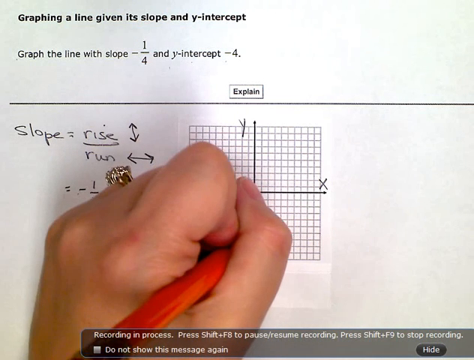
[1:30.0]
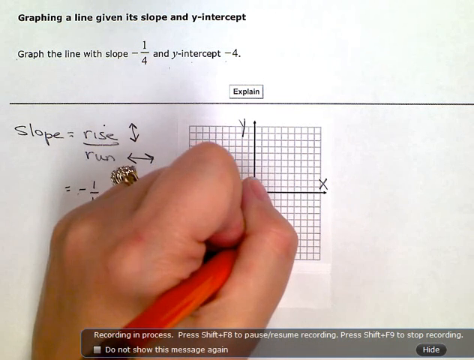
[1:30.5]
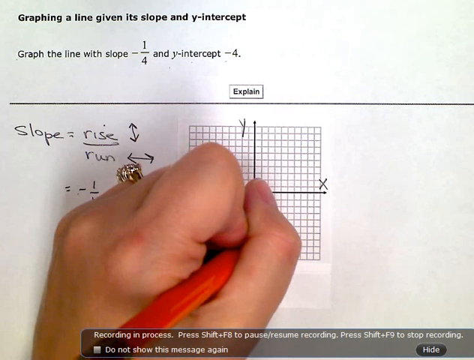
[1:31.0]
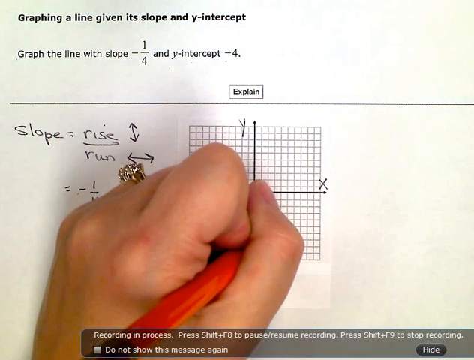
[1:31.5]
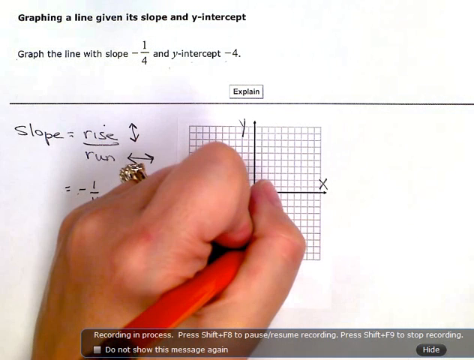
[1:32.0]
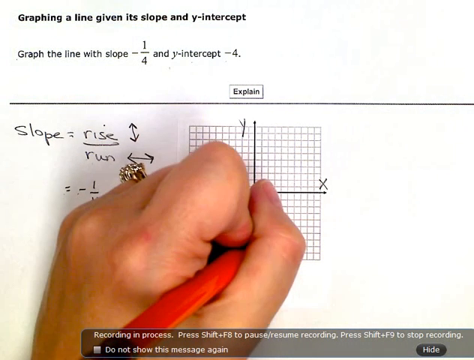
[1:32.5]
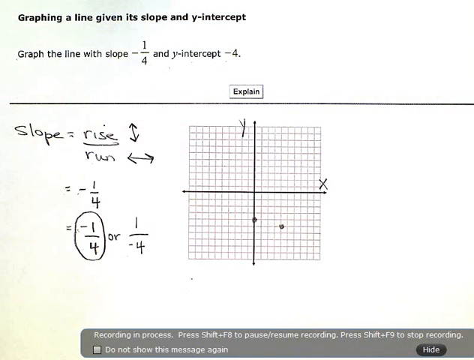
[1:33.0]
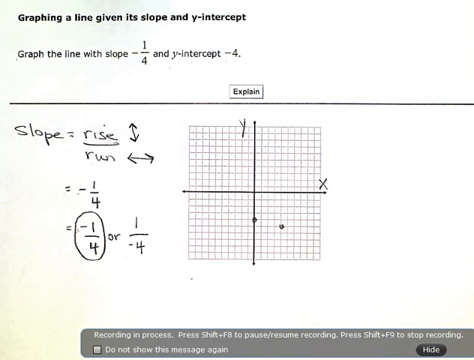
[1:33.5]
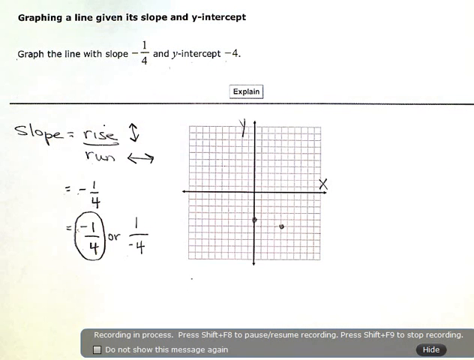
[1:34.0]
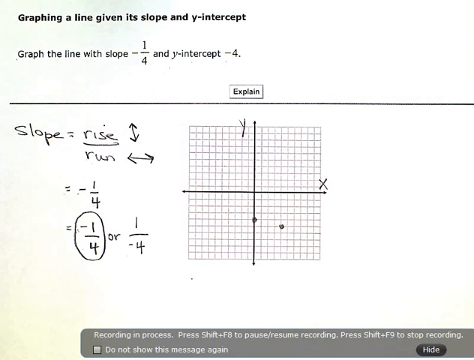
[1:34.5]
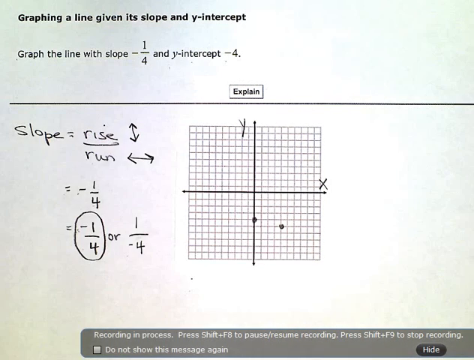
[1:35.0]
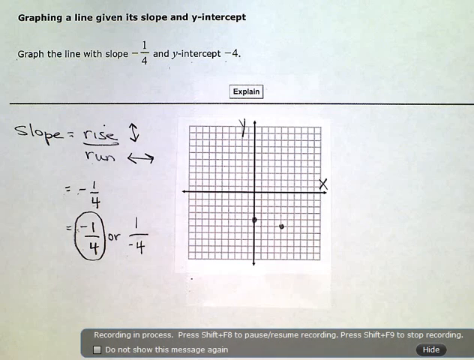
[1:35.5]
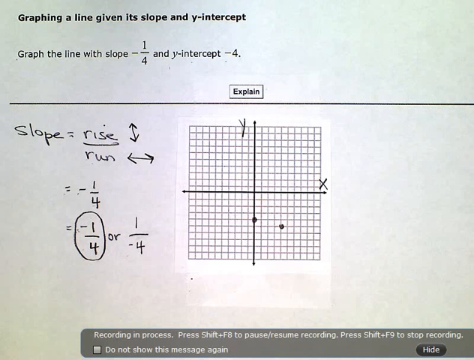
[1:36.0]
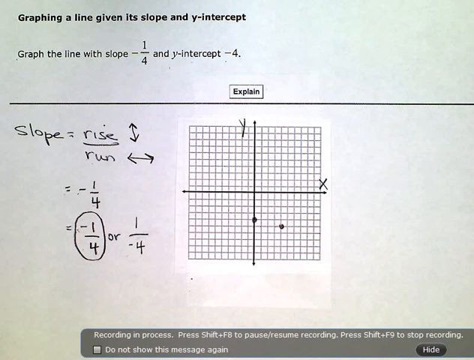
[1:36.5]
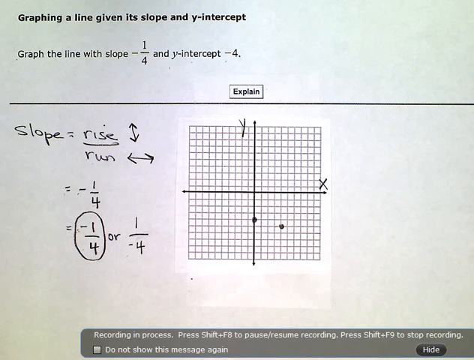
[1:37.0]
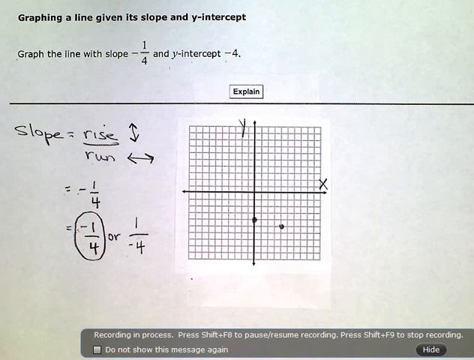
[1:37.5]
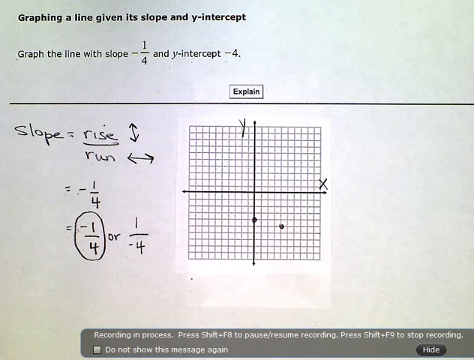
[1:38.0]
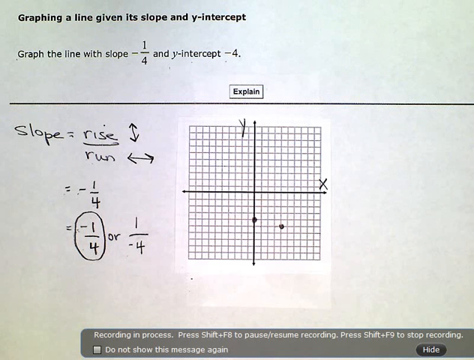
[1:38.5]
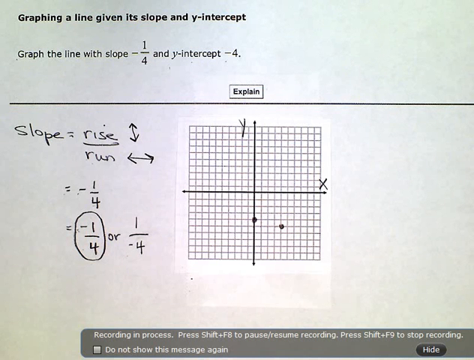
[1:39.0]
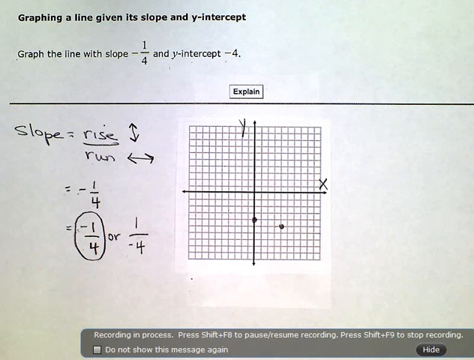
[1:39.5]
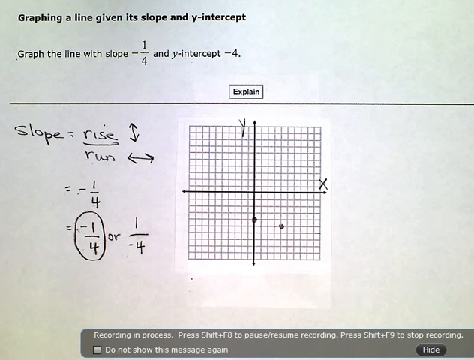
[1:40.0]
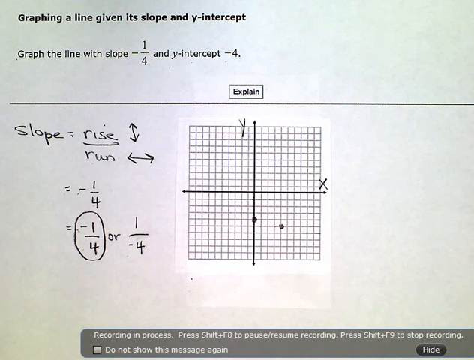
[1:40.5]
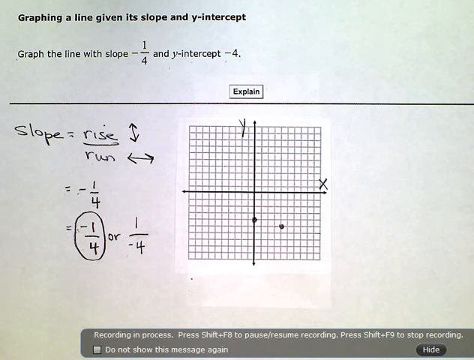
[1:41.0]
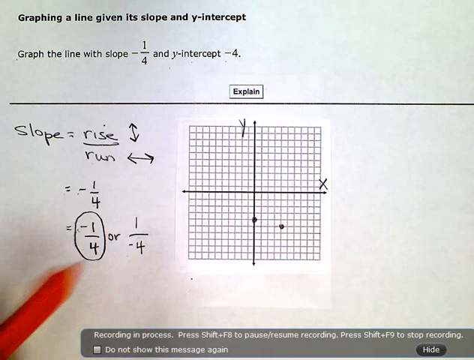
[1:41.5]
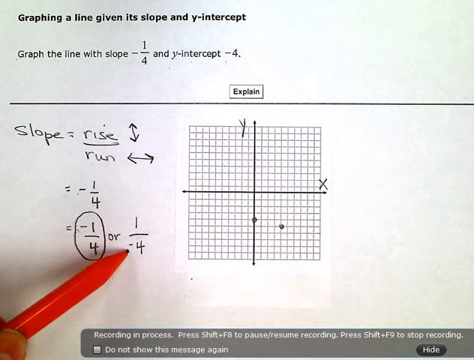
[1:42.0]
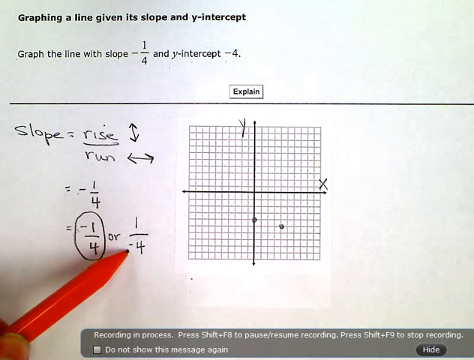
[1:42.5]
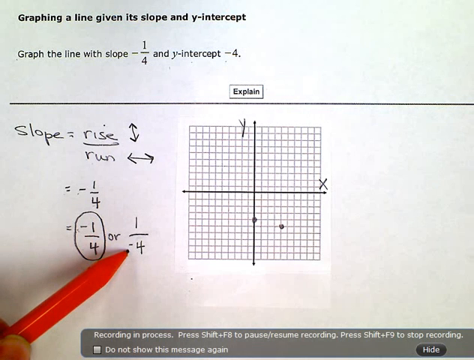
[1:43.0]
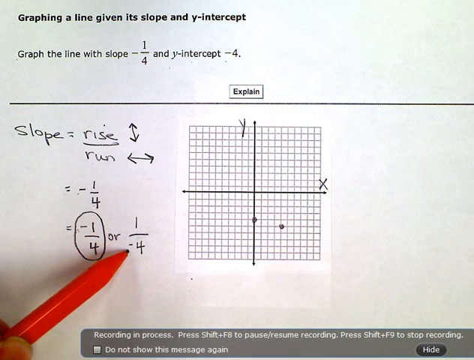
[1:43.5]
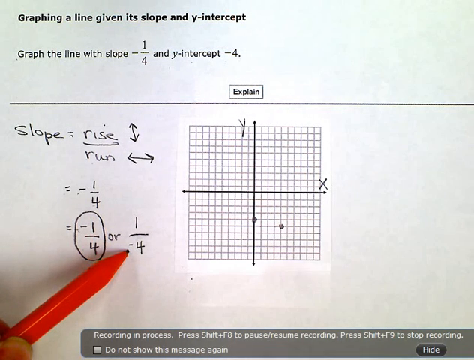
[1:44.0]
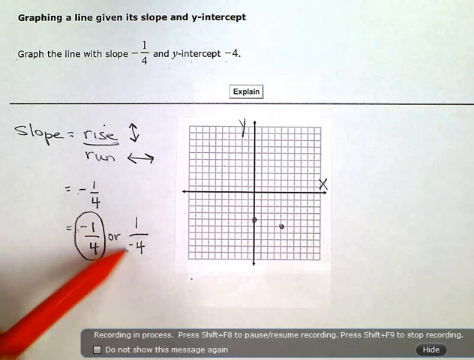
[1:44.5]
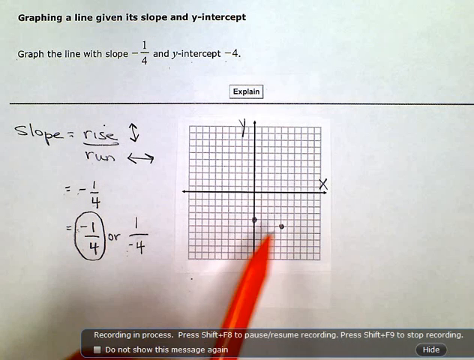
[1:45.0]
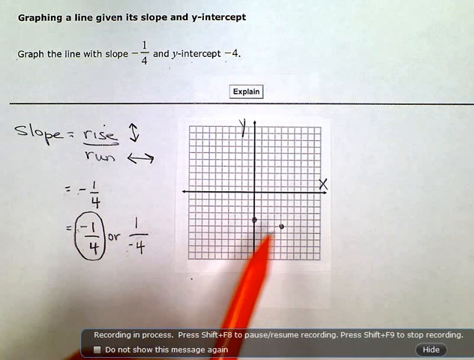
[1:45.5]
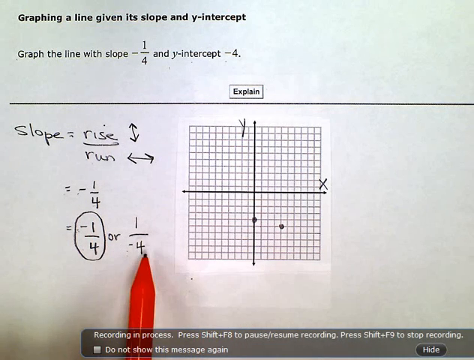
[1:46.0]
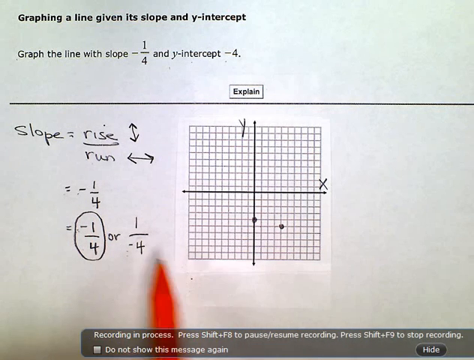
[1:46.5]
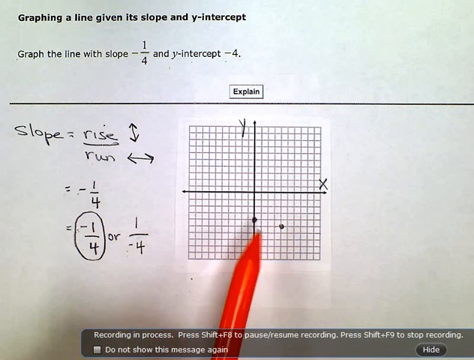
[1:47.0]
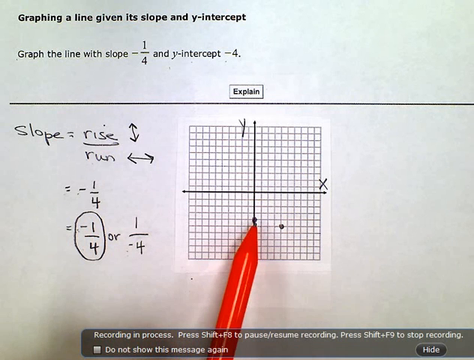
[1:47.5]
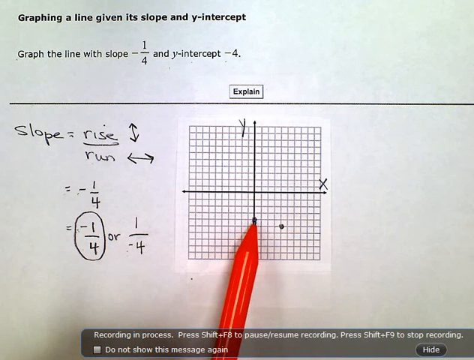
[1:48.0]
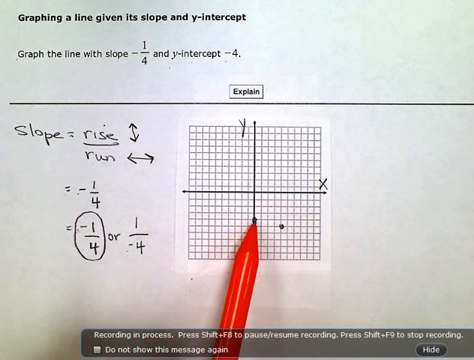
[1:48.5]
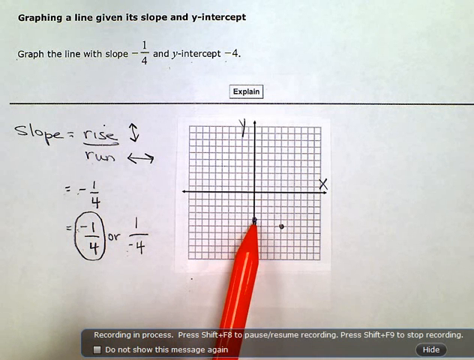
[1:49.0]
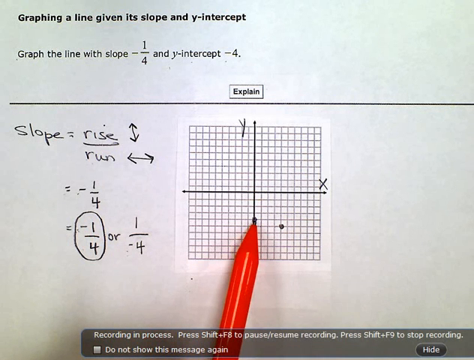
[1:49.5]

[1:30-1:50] The instructor appears to apply a line at the bottom right of the grid, probably the negative one-fourth slope, a negative slope. They appear to add a dot for negative 4, plotting in red at negative 4 on the y-axis and then negative 4 on the x-axis, apparently to plot both points.